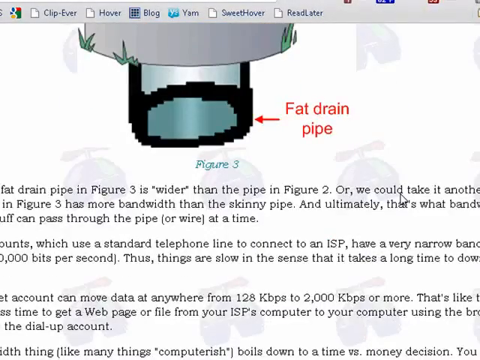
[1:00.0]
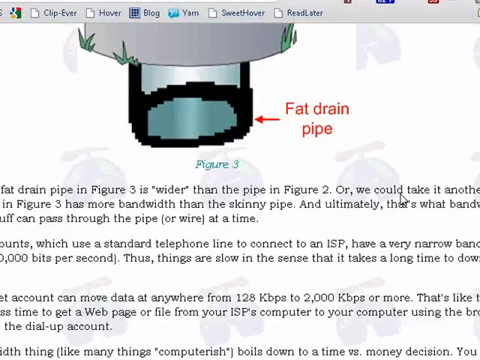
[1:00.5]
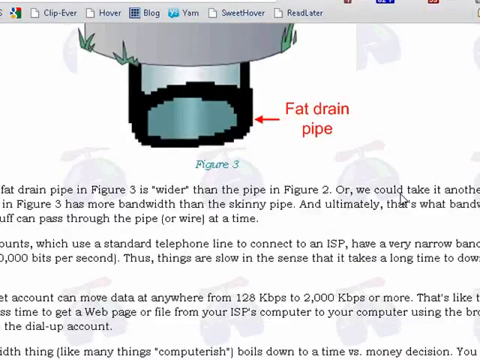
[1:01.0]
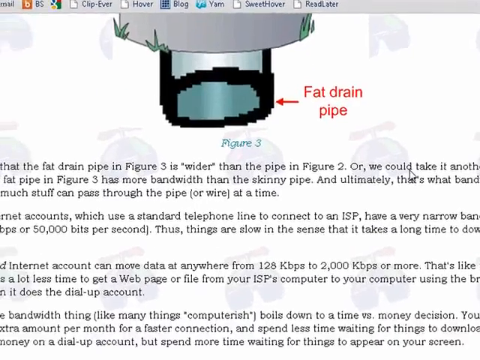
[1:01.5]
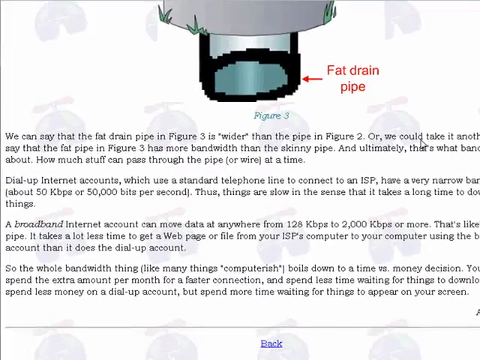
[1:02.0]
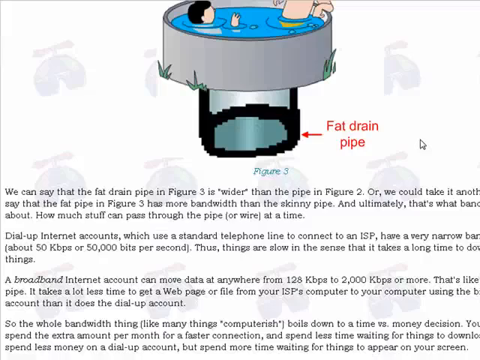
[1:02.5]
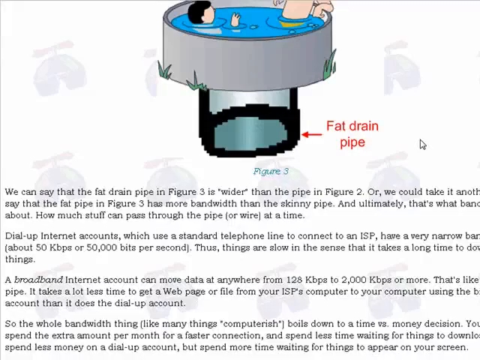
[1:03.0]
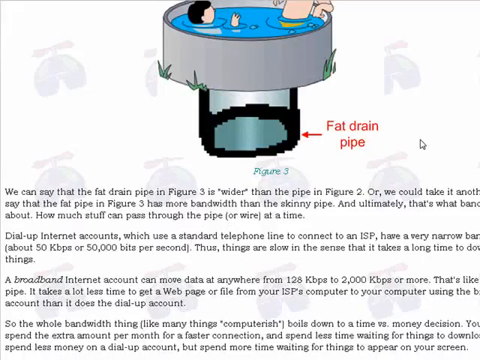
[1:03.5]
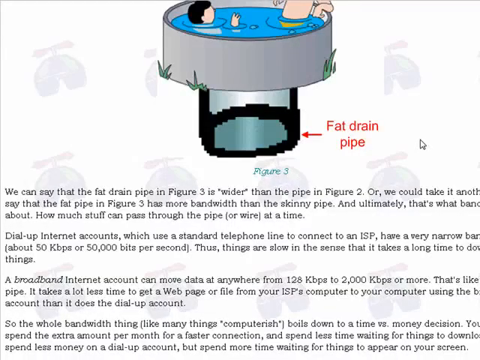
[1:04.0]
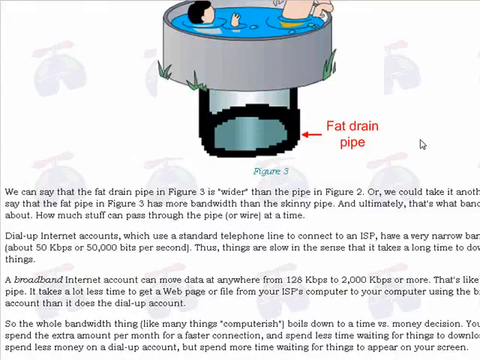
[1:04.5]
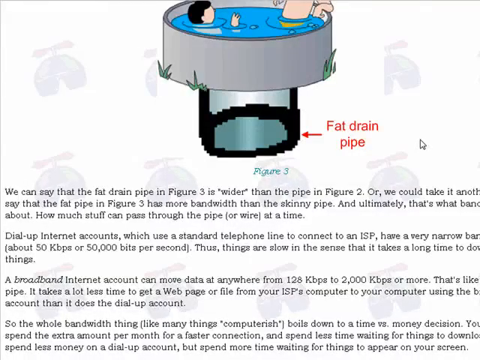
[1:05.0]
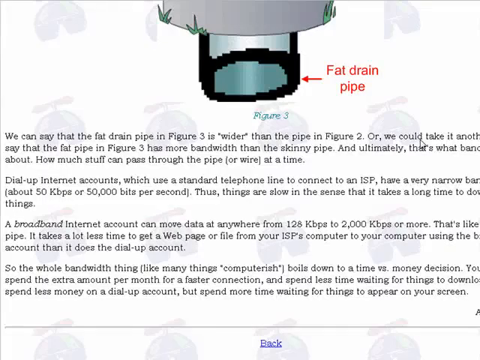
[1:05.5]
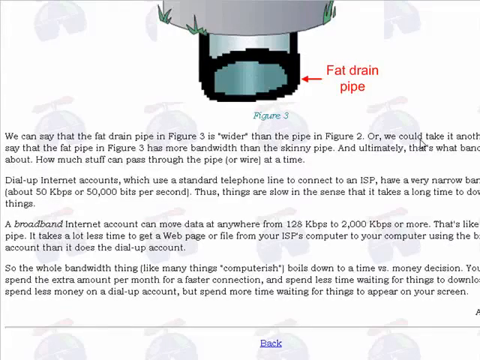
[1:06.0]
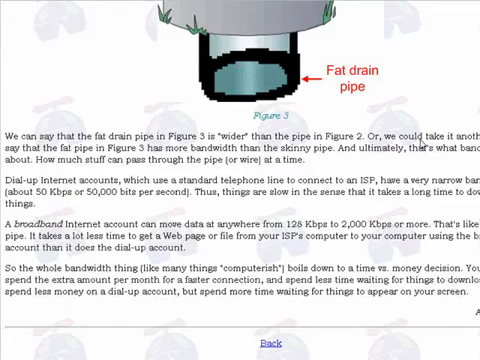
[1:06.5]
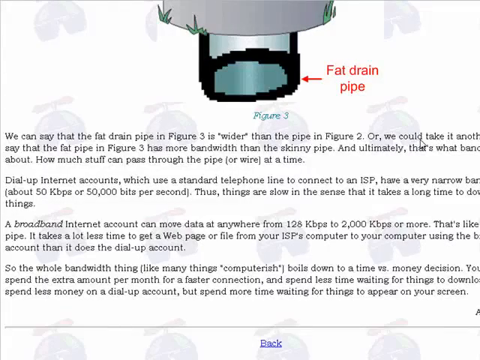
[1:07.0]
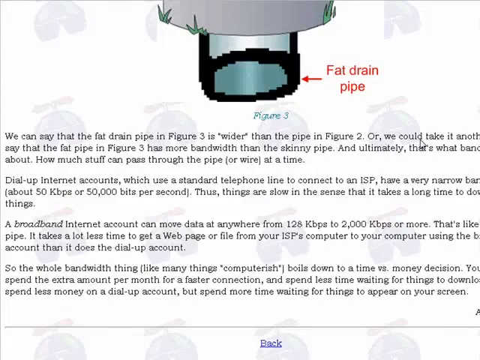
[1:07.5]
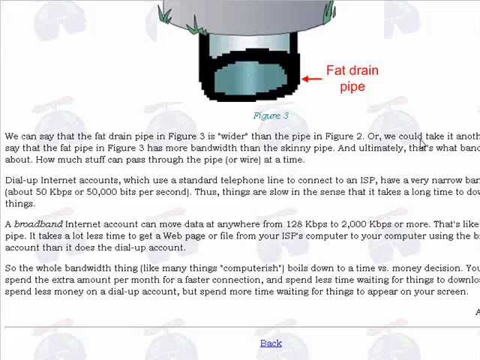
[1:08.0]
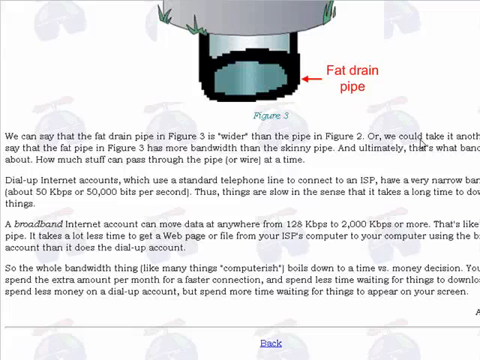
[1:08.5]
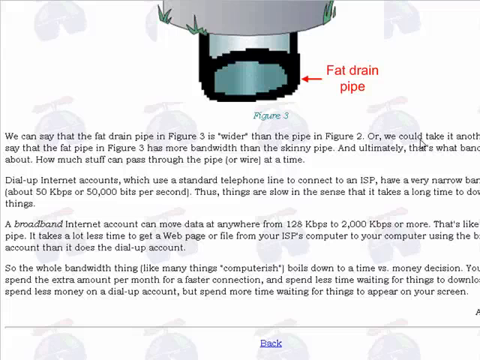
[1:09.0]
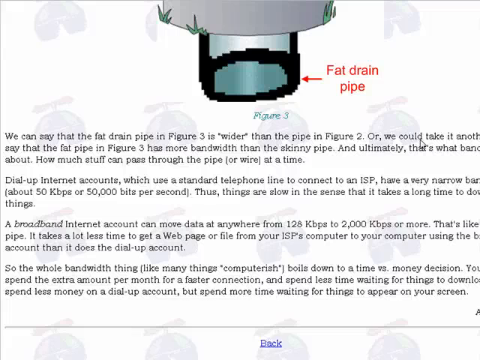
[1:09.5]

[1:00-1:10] A gray border runs across the top with six links just at the edge. The bottom of the pool is at the bottom, with the fat drain pipe underneath it; to the right, an arrow points to it labeled "fat drain pipe," with "figure three" underneath and three paragraphs of information. The cursor is near the right side. The view zooms out a little so the whole pool is visible, then slowly zooms back in a little and moves down slightly, showing four paragraphs of information. The cursor stays on the right side, mostly static. In the background, blurry pictures of little designs are visible, including what looks like a hat with a little spinny thing on top.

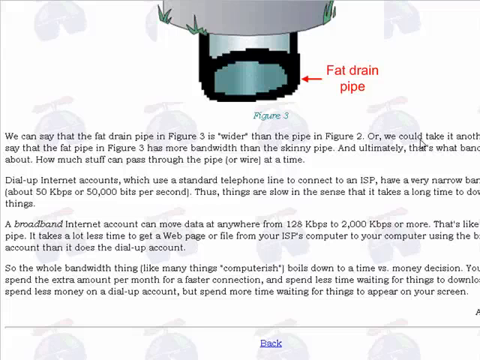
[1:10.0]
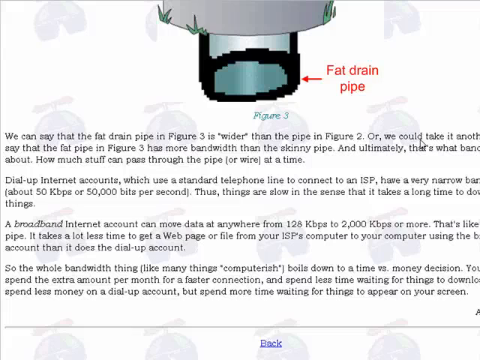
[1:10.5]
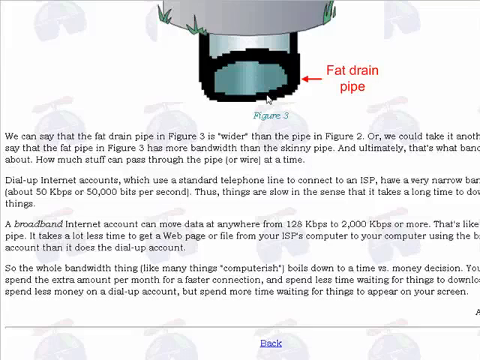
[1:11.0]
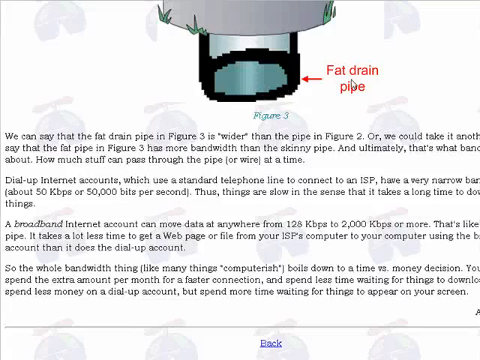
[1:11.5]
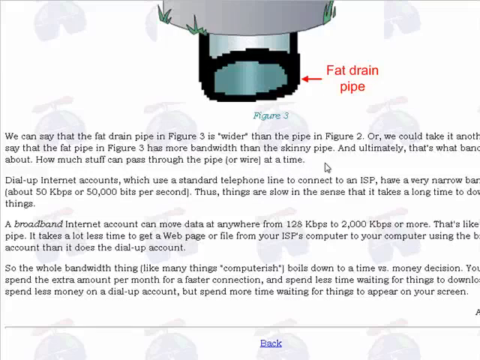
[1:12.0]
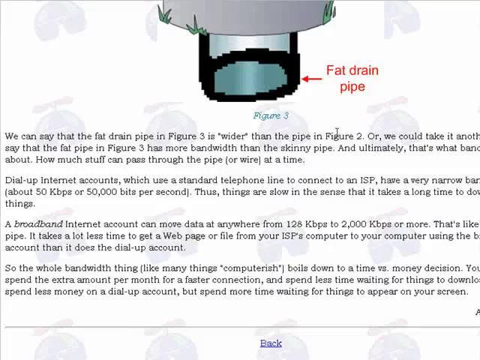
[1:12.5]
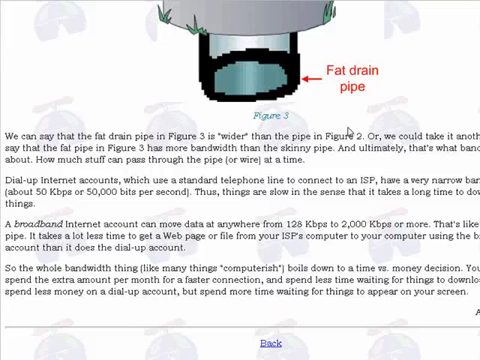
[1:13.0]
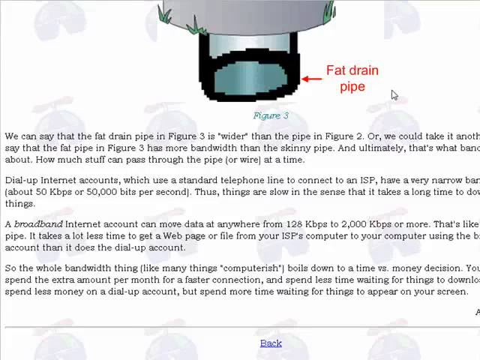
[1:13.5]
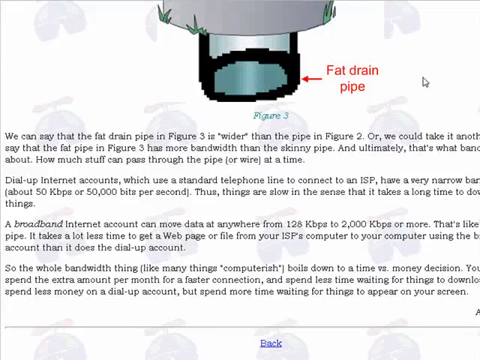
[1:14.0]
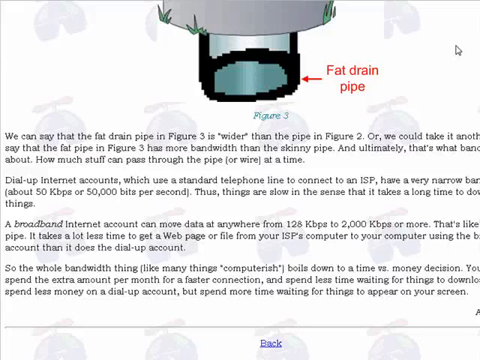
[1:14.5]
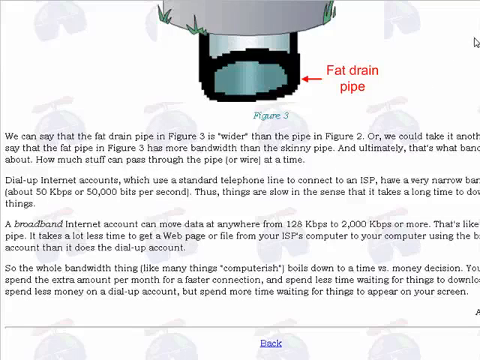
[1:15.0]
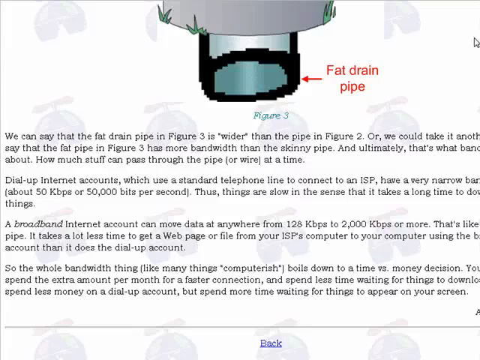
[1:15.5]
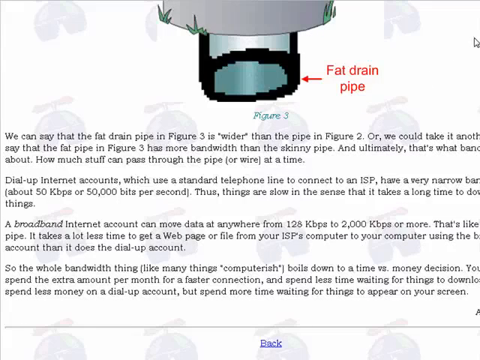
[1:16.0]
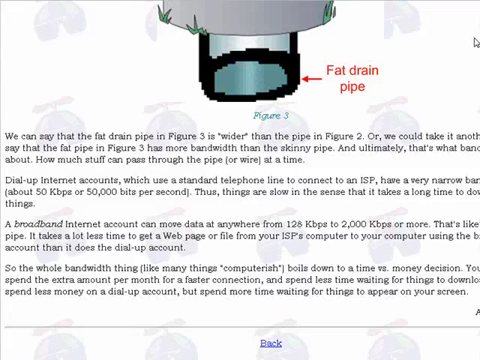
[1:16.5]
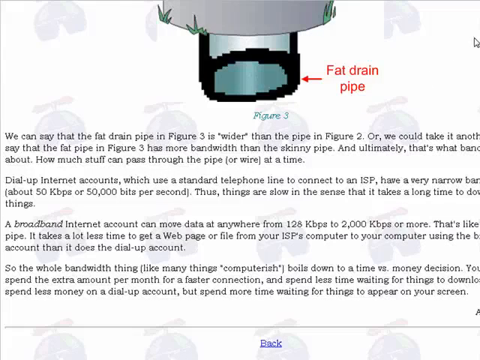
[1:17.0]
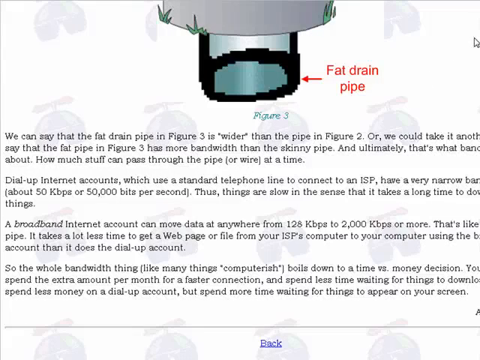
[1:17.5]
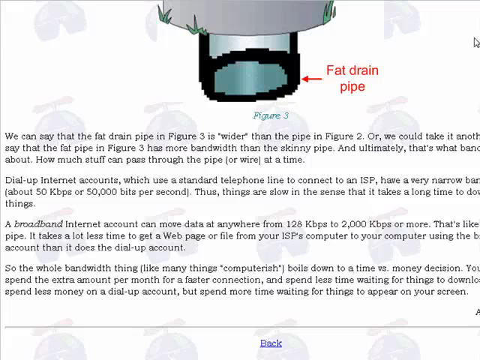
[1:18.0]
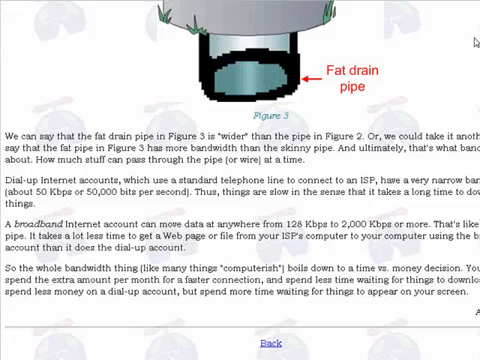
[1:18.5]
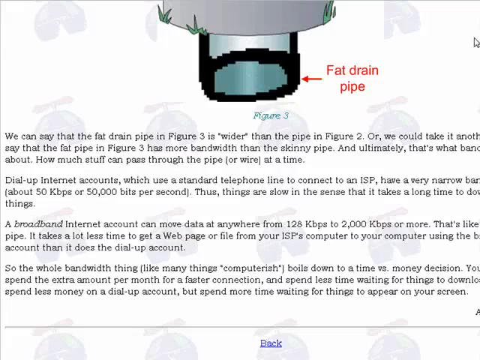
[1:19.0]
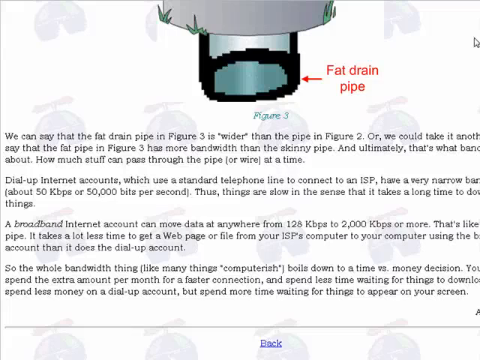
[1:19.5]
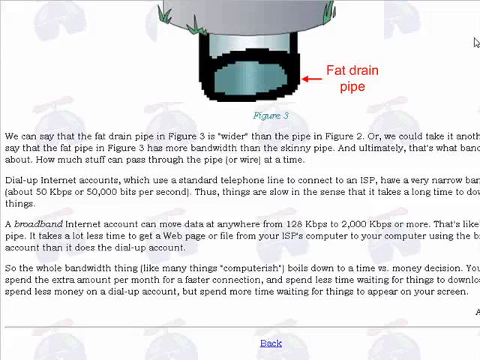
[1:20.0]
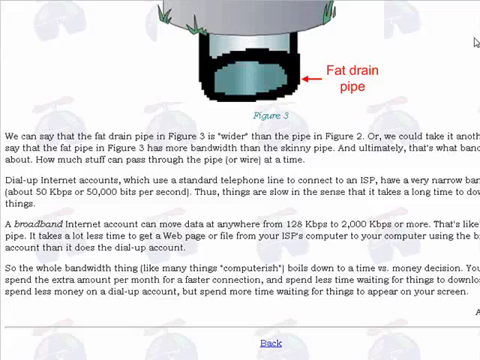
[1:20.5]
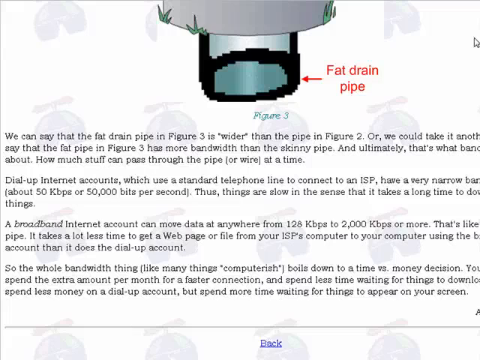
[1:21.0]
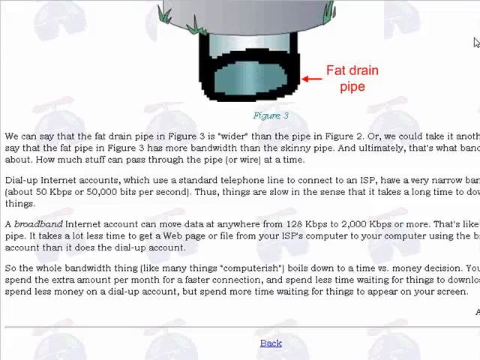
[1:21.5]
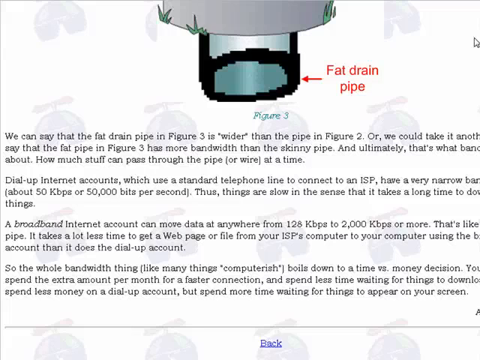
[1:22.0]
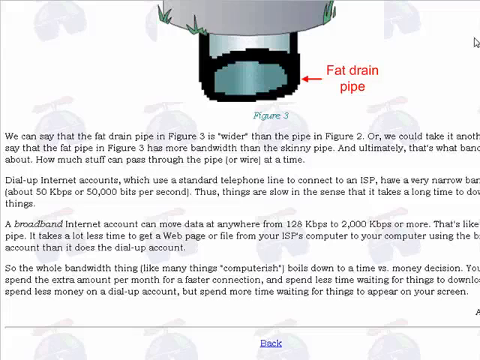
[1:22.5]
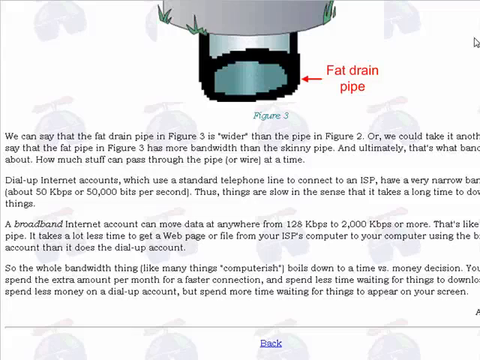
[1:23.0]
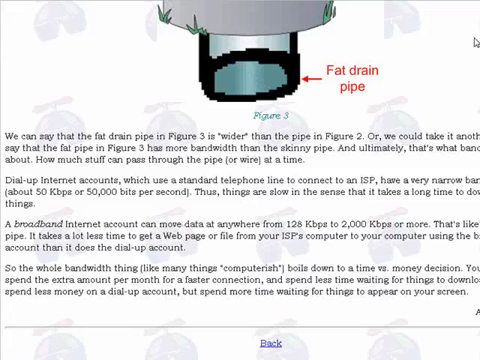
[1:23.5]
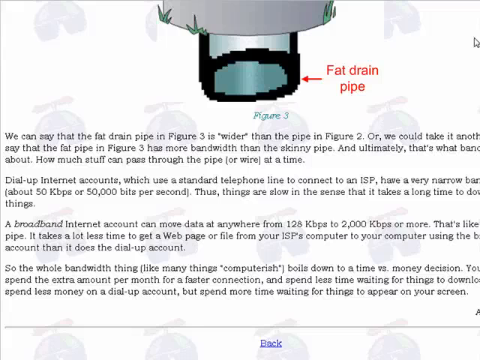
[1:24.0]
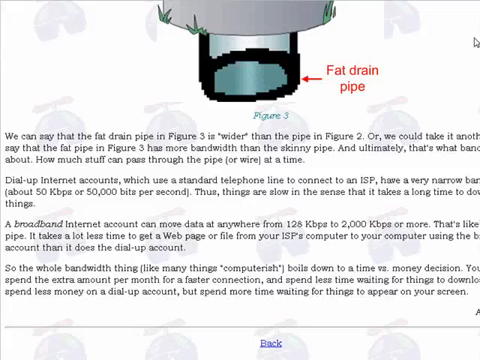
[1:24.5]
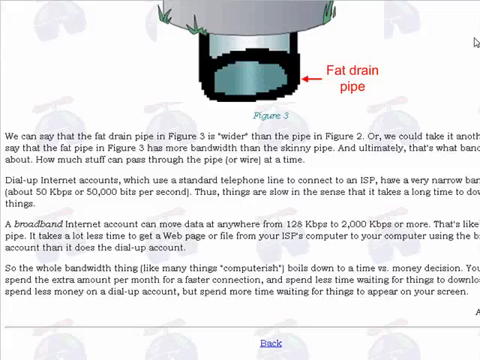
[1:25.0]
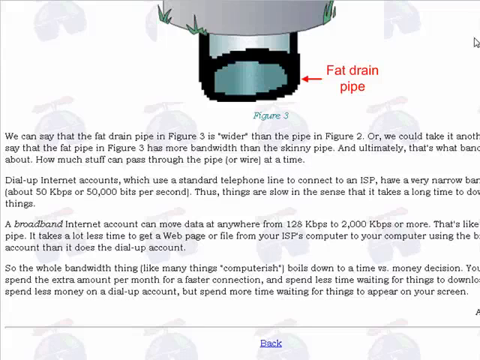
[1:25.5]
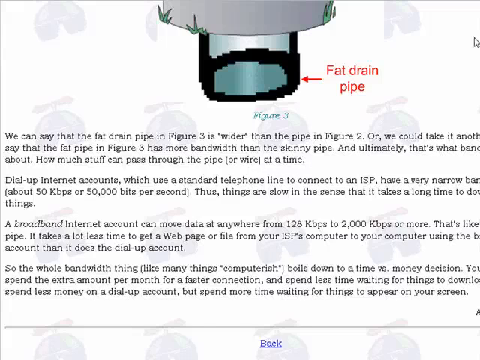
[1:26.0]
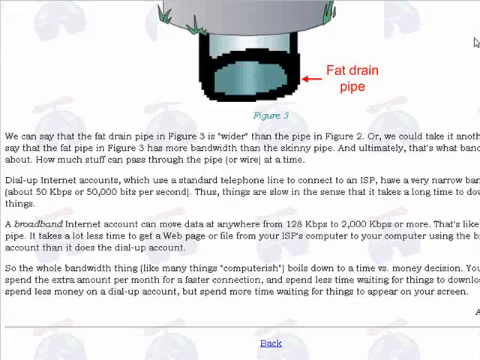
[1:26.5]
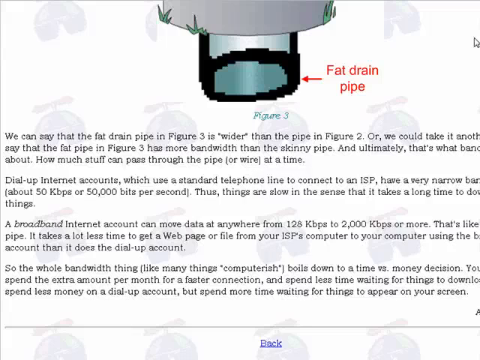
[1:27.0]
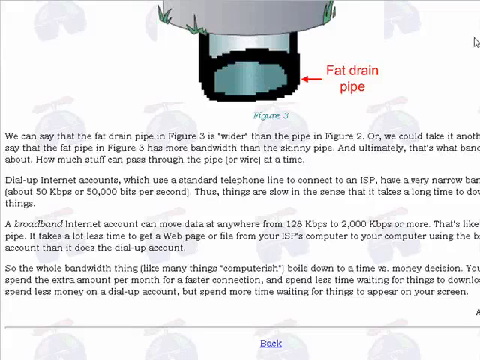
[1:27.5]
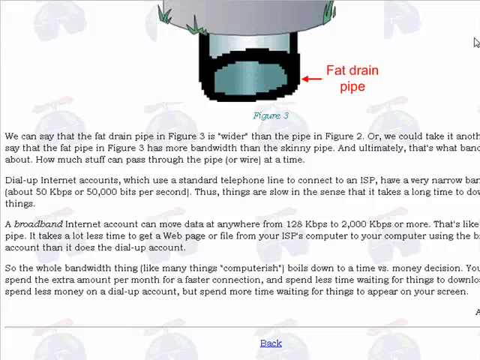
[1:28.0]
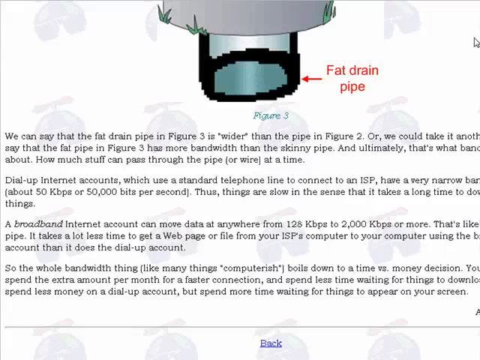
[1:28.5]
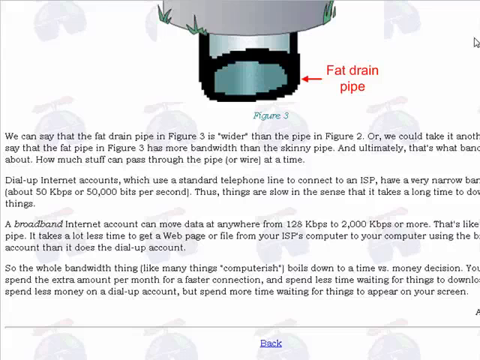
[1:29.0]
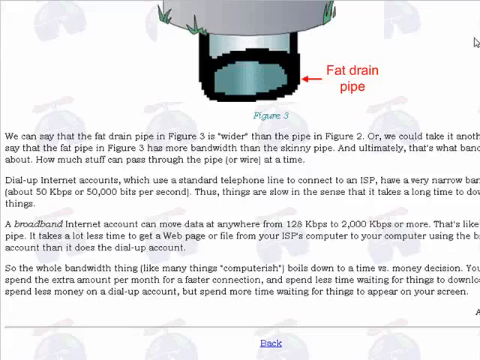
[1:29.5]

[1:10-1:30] At the top center only the bottom edge is visible, with the big fat drain pipe underneath it. To the right is a red arrow pointing left, with "fat drain pipe" in red, and underneath it "figure three" in blue. Across it are four designs across and four up and down, almost like a watermark, which look like a kind of hat with a little propeller on top. Below are four paragraphs of information. The cursor, near the right side, moves up to about two inches from the top near the pipe, passes over it, moves to the words "fat drain pipe," then down to part of the first paragraph, then up to just shy of the top right corner, where it sits for a moment. It then moves down toward the top paragraph again, near the right.